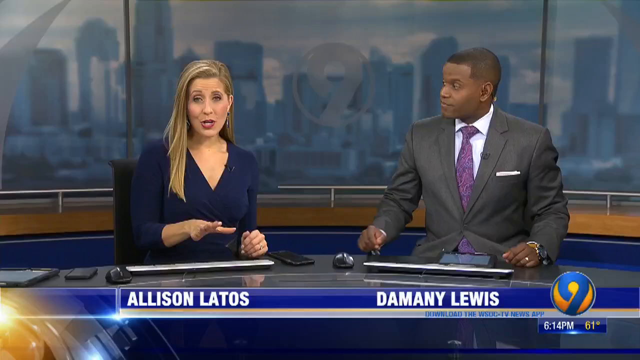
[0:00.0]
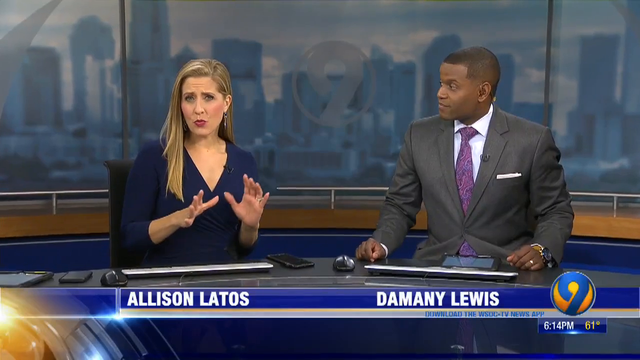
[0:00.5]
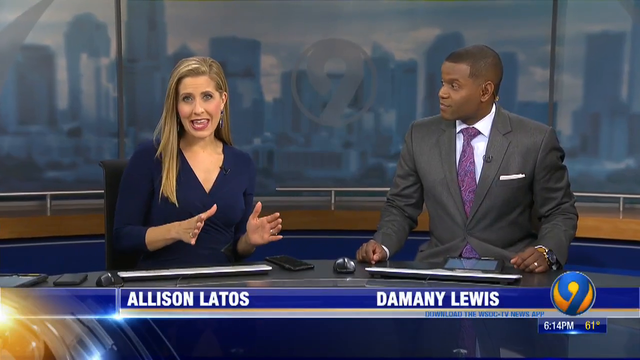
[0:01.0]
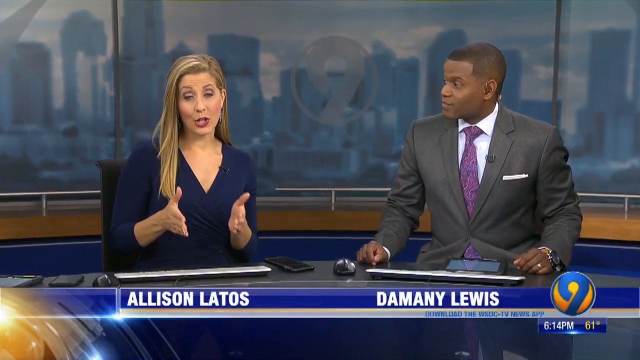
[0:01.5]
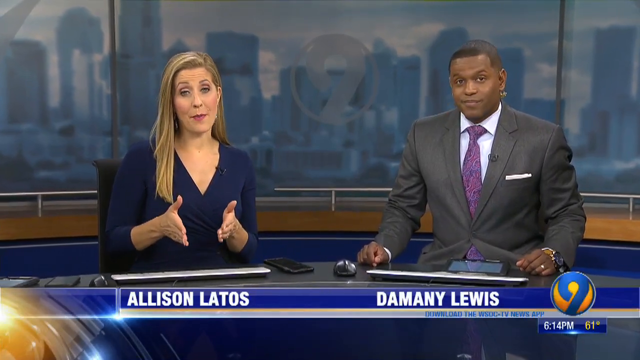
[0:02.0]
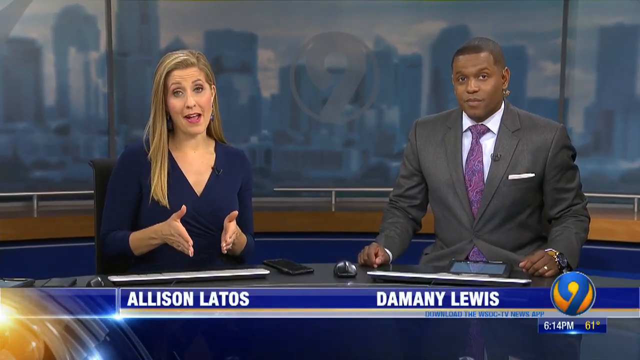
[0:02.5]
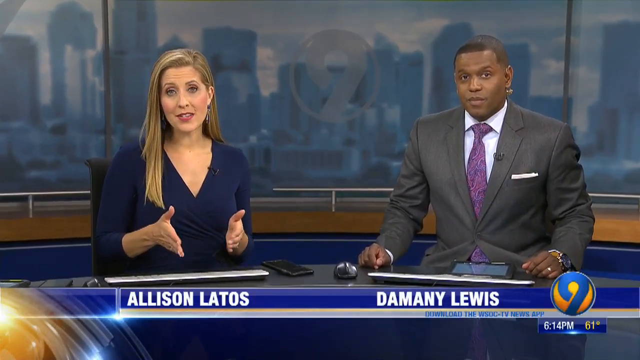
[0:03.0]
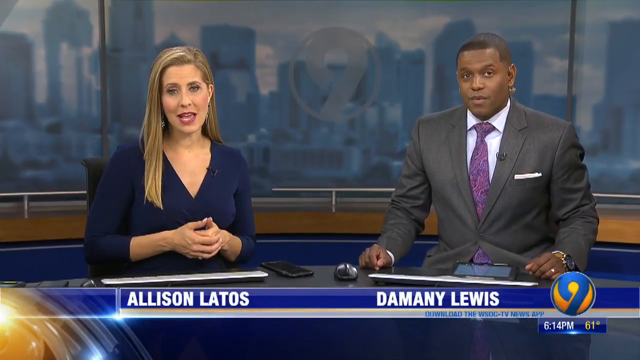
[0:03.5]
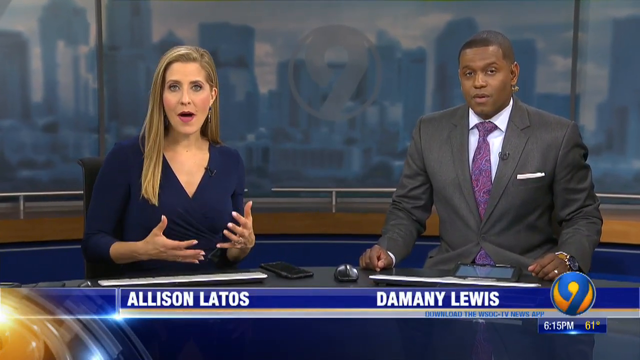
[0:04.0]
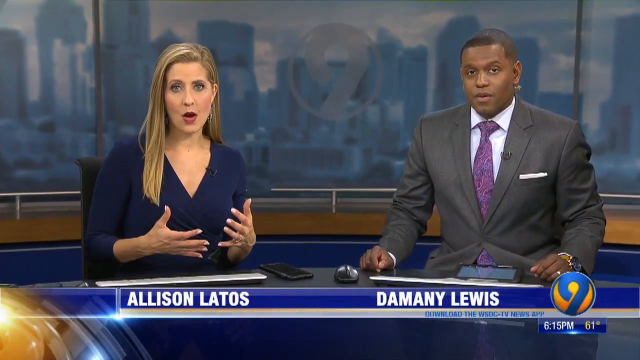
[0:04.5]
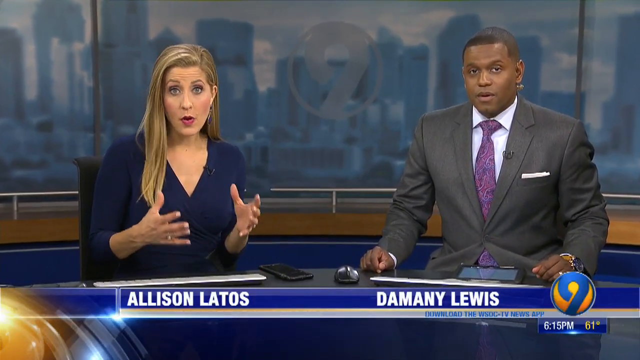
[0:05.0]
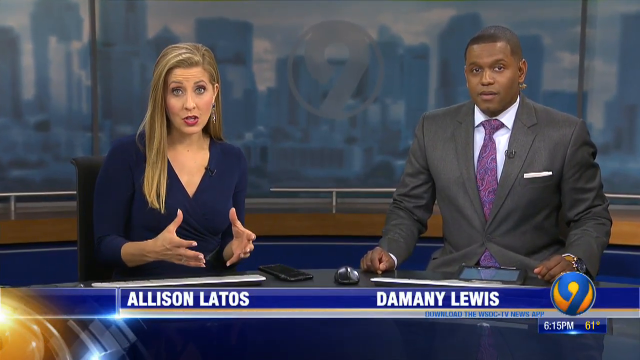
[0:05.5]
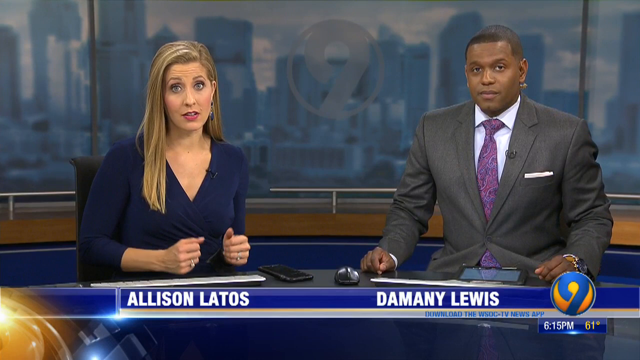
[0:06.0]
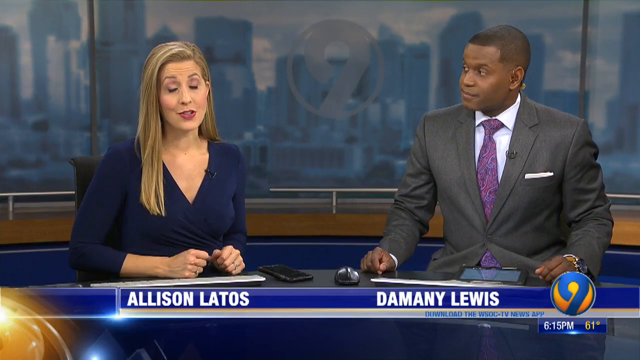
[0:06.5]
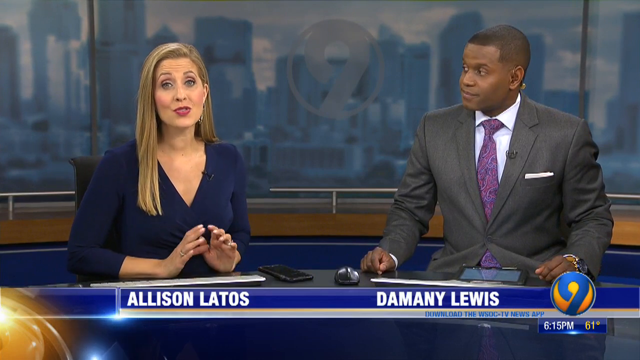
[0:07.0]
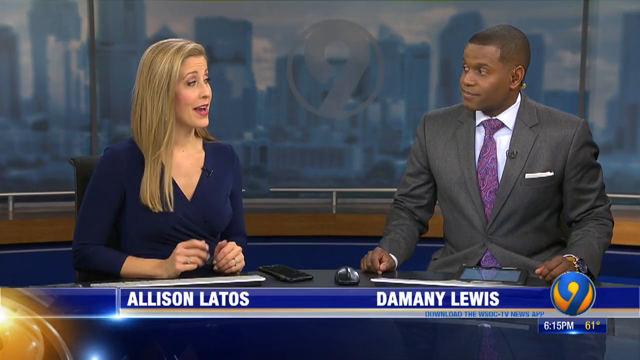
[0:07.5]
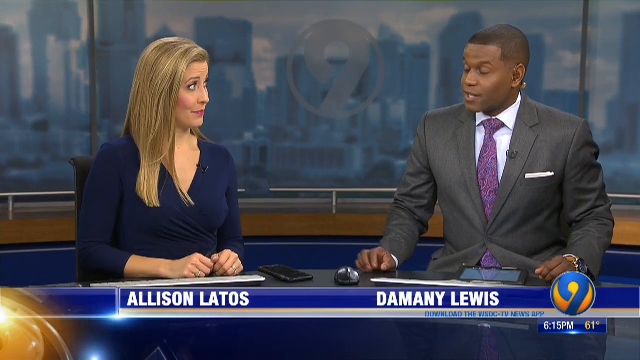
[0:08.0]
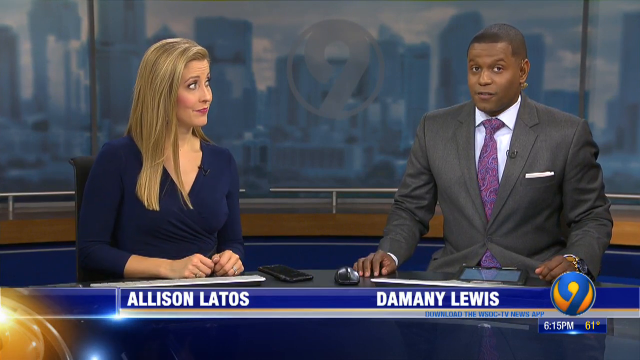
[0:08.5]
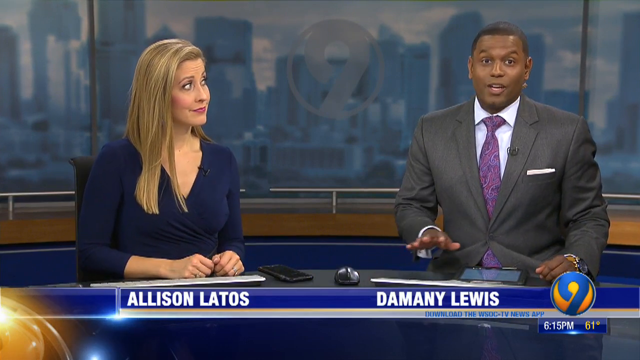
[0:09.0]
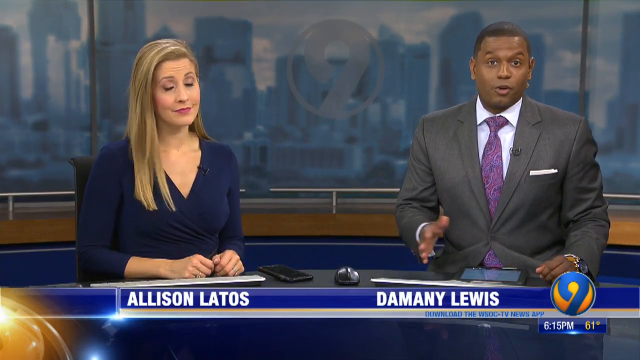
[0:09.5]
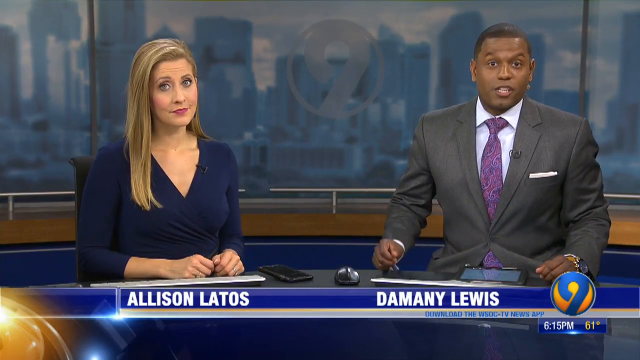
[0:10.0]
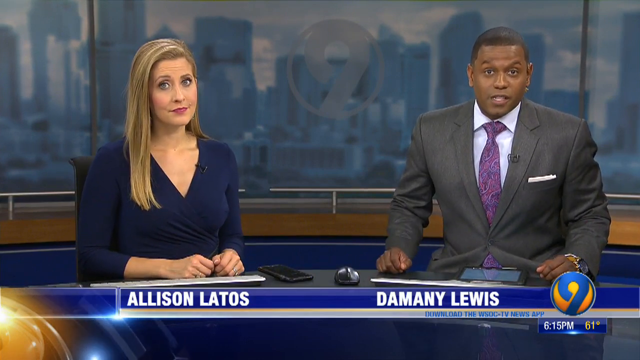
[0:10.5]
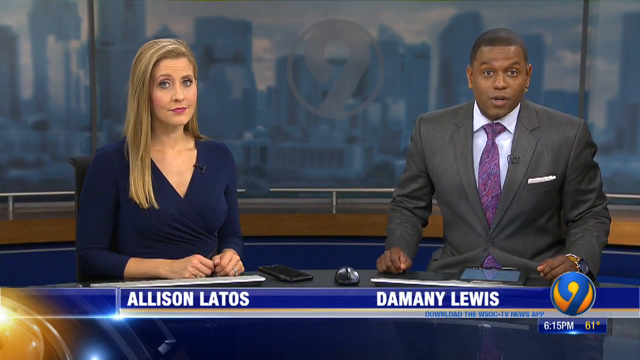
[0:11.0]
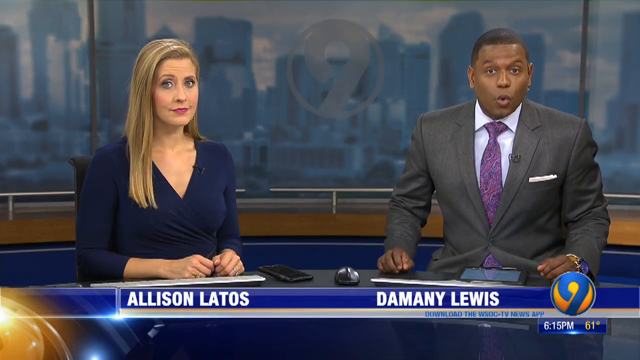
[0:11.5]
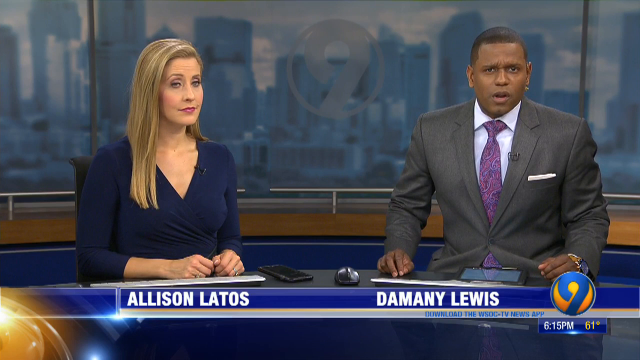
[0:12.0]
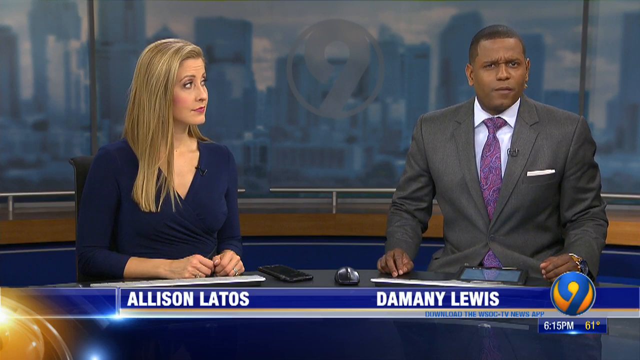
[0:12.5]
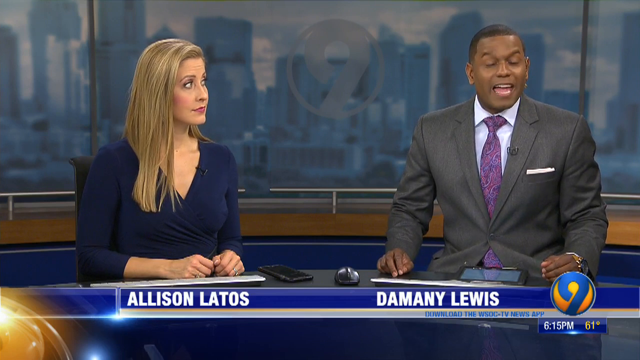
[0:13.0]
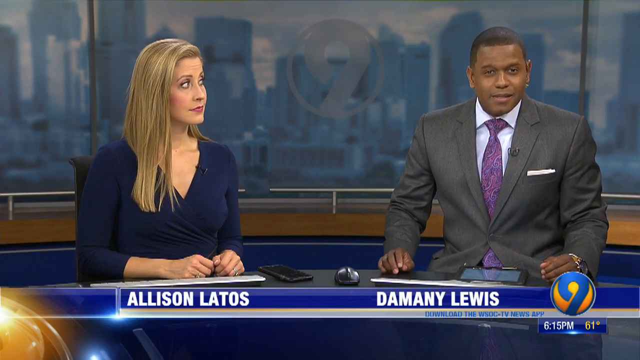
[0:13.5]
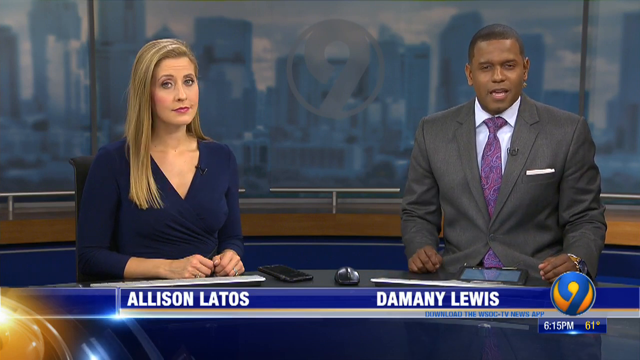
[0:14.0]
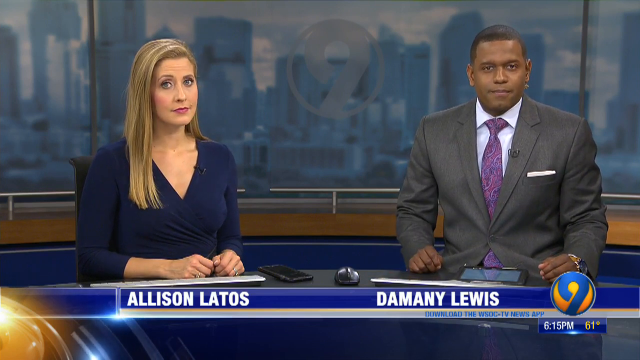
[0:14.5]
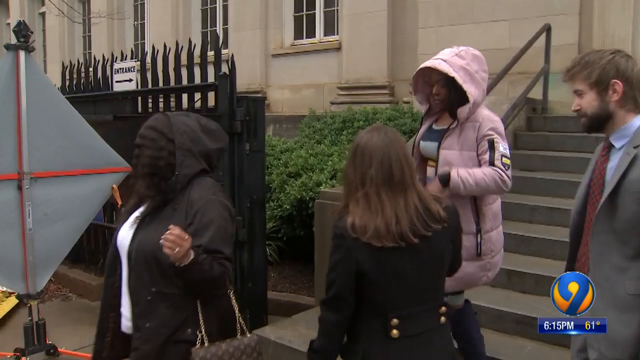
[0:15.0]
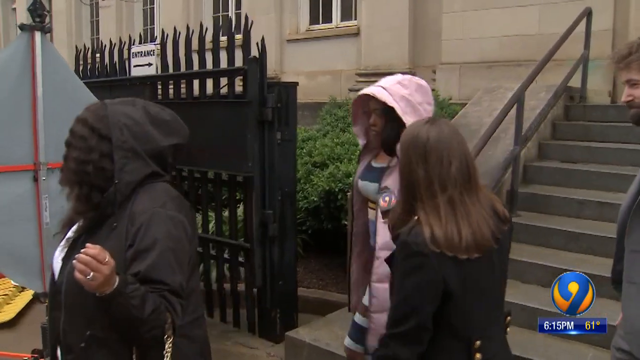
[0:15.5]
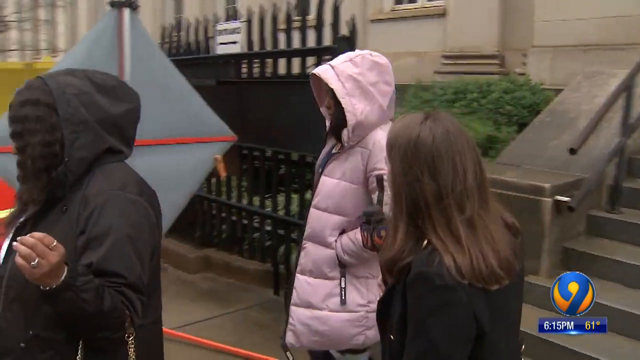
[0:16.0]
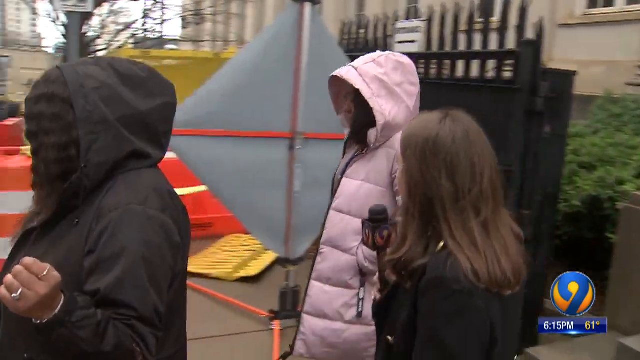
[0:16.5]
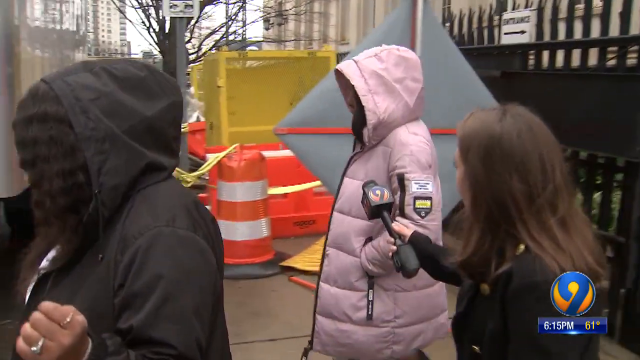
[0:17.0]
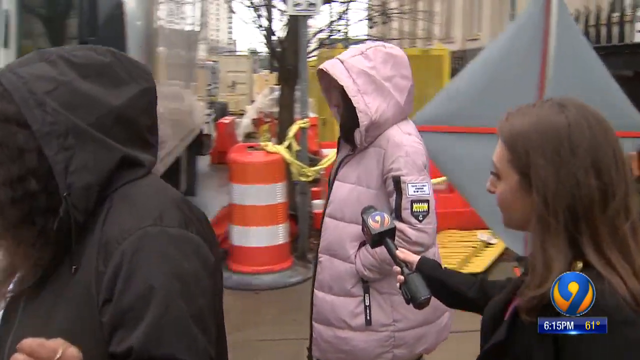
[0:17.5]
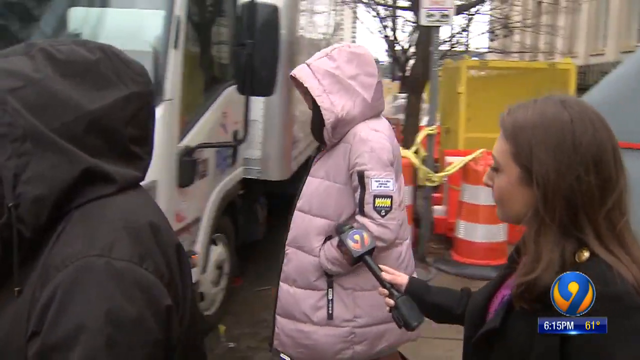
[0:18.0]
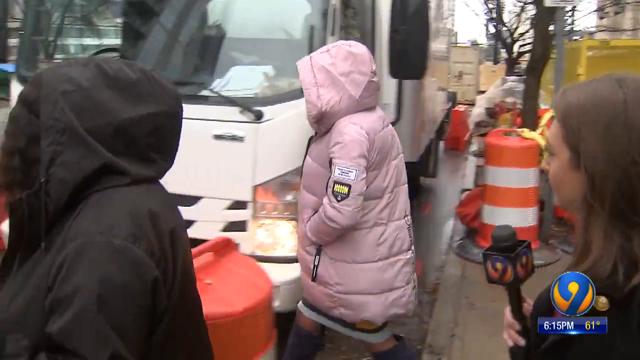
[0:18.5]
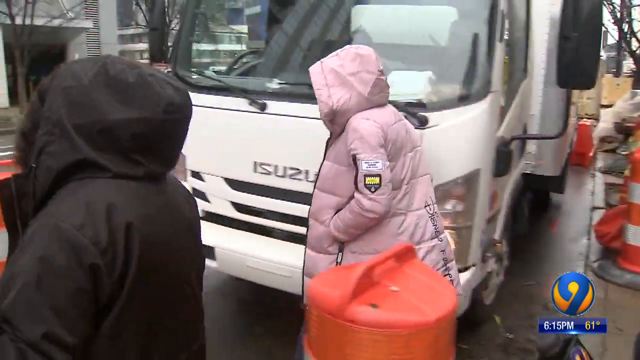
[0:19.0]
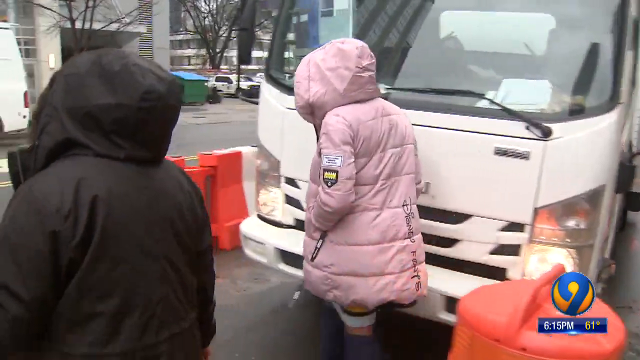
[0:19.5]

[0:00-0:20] Two news presenters are in a studio, both facing the camera. One, apparently named Alison Latos, is a white woman with brown hair wearing a blue dress. Her co-worker, Damani Lewis, is a Black man wearing a grey suit with a white shirt and a purple tie. Behind them there seem to be buildings, though they cannot be seen clearly. Alison Latos speaks first, then looks at Damani, who also starts talking while facing the camera. The scene changes to a few people, some of whom appear to be Black, apparently coming out of a building. One lady in particular wears a pink jacket, and behind her is someone who appears to be a reporter, holding a microphone and trying to get a comment from her. Around the area there seem to be orange and white cones and something yellow. As the lady walks, she seems to pass in front of a white car.